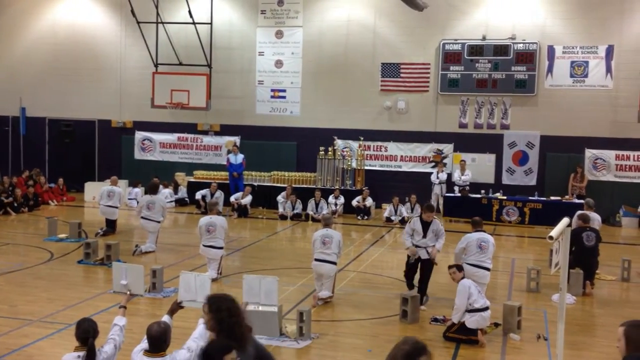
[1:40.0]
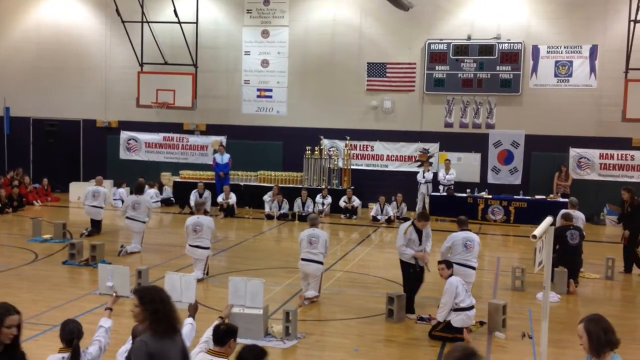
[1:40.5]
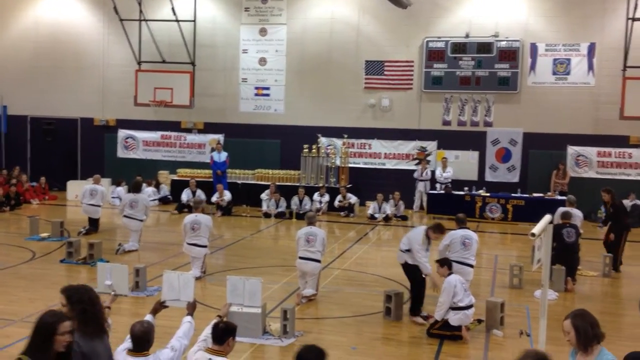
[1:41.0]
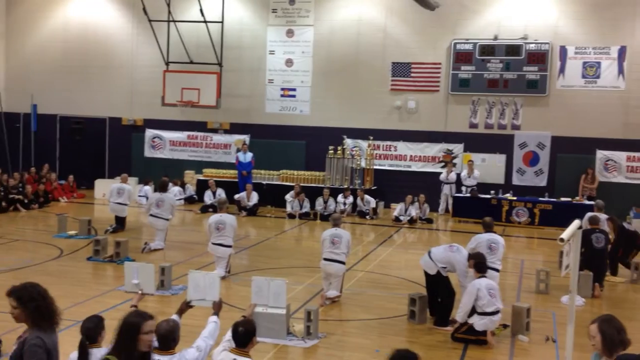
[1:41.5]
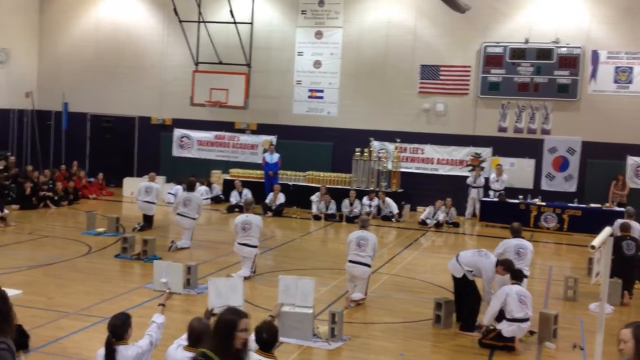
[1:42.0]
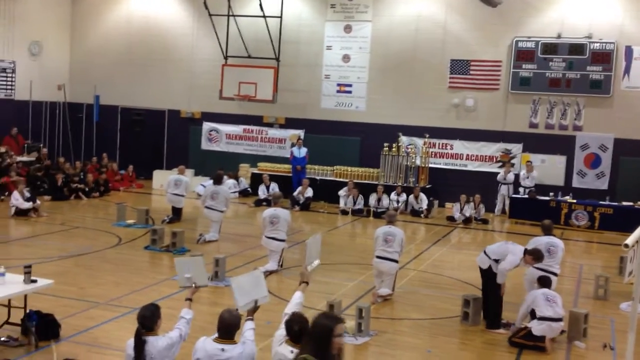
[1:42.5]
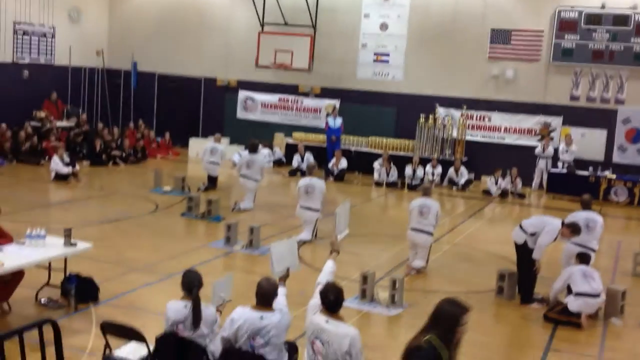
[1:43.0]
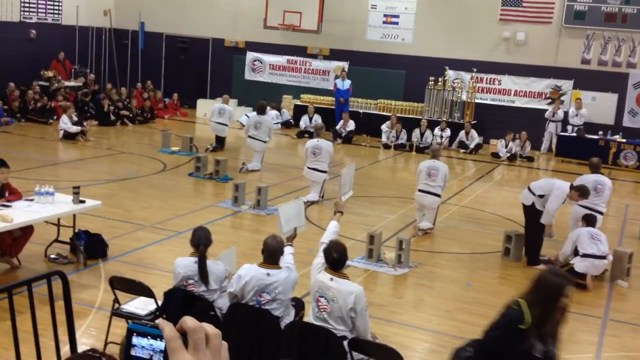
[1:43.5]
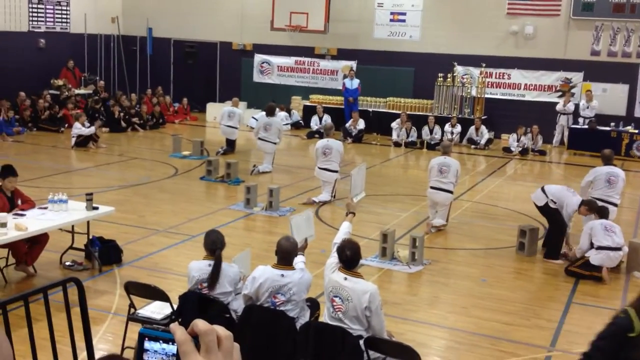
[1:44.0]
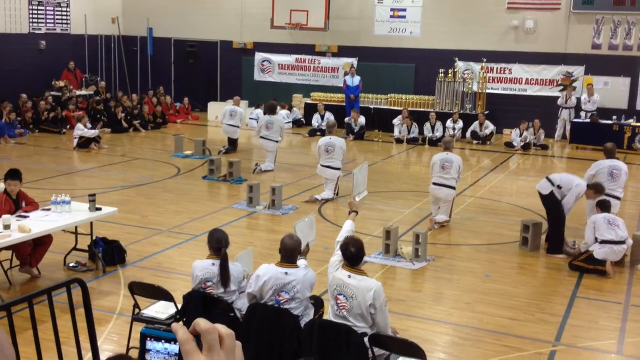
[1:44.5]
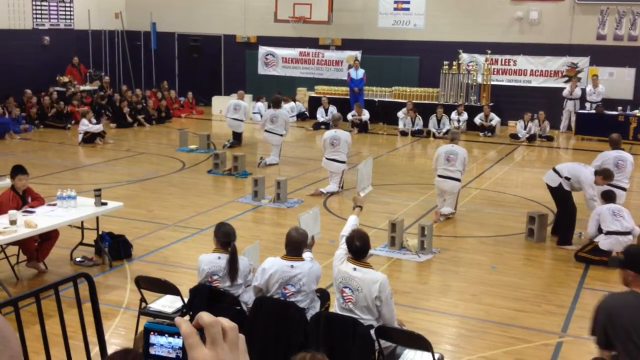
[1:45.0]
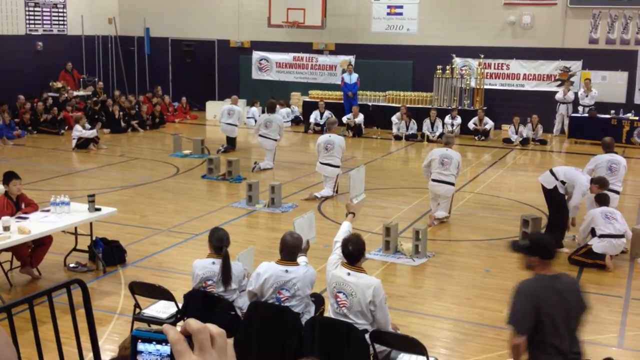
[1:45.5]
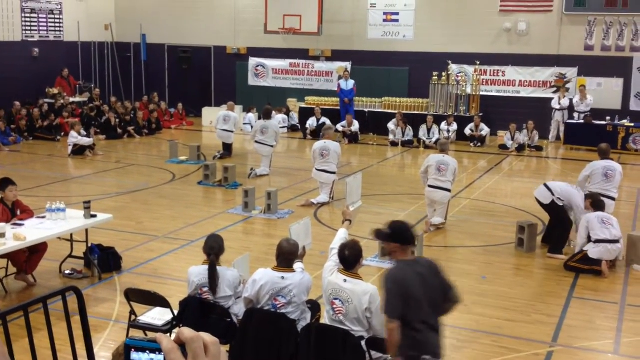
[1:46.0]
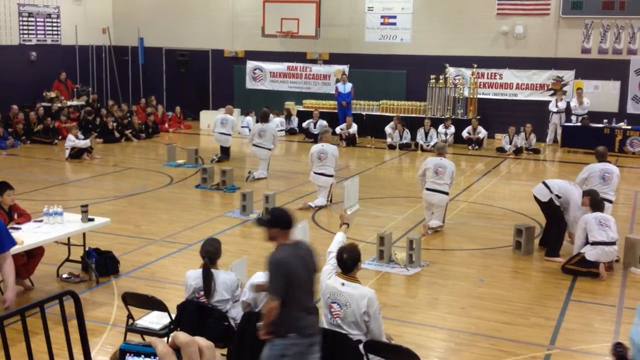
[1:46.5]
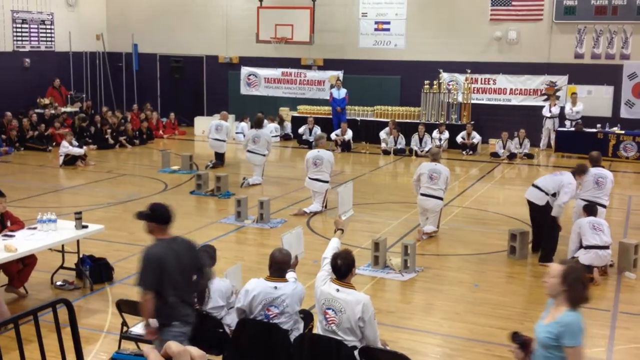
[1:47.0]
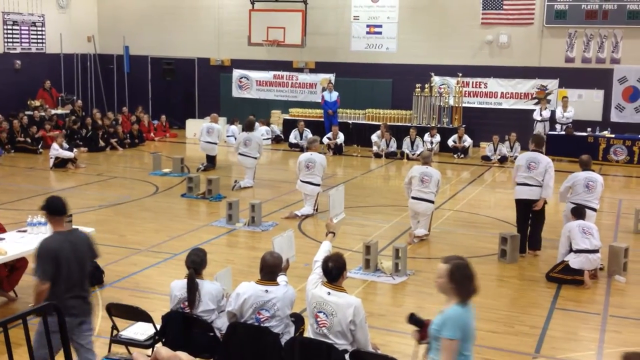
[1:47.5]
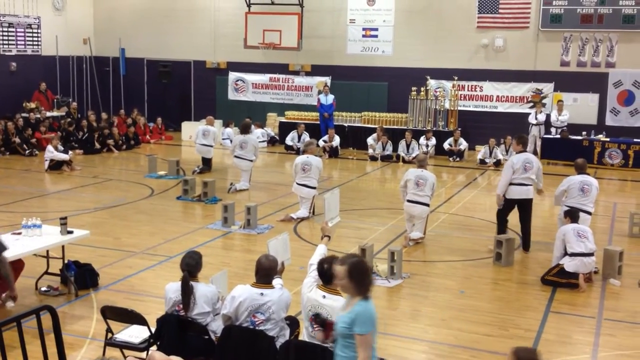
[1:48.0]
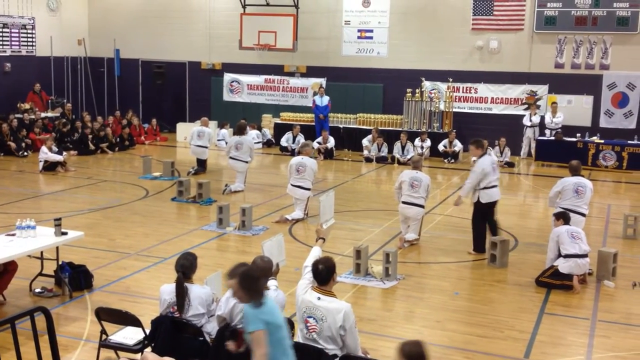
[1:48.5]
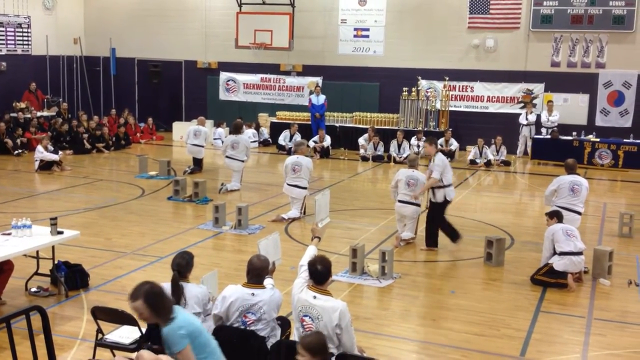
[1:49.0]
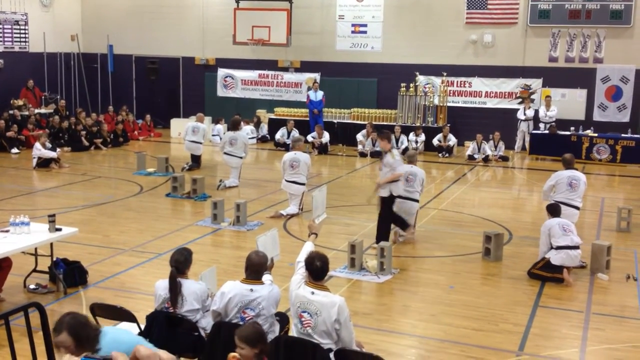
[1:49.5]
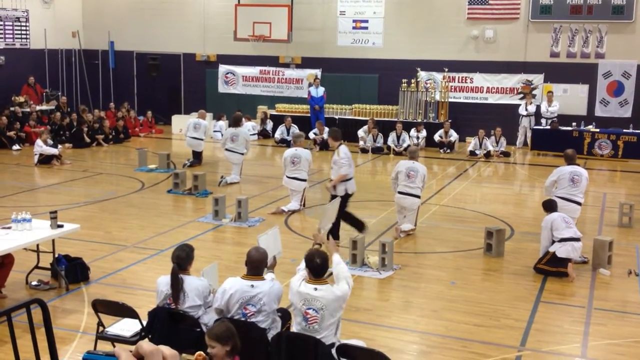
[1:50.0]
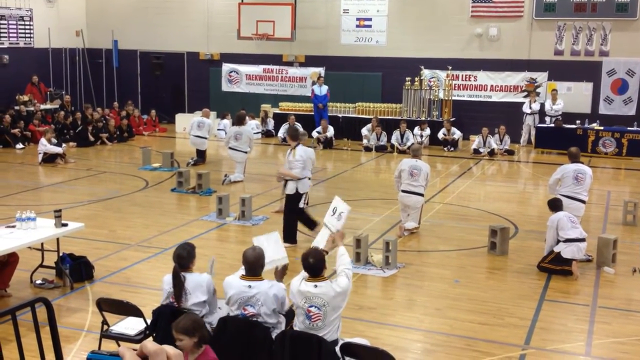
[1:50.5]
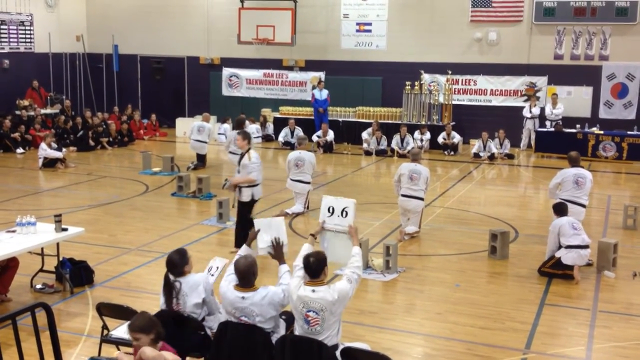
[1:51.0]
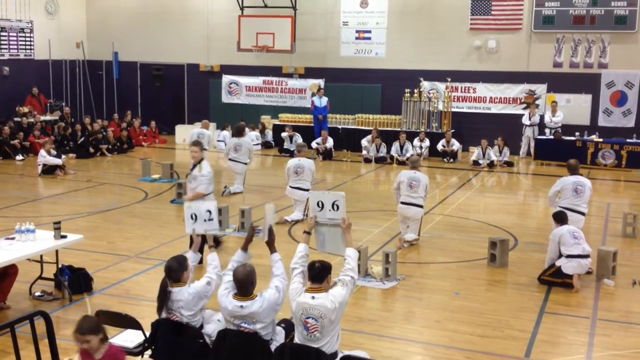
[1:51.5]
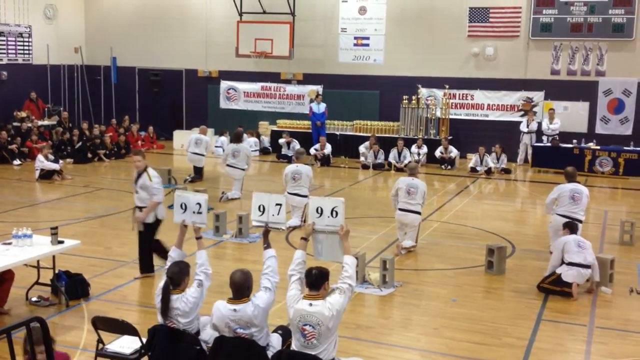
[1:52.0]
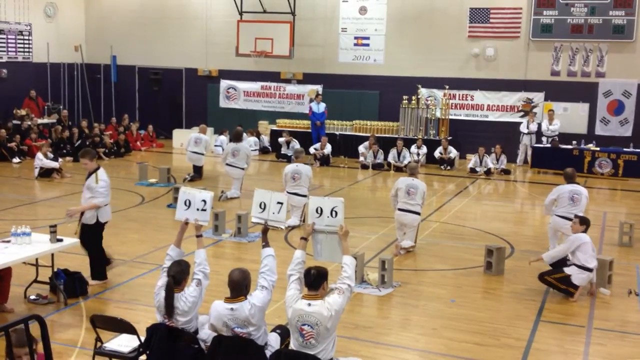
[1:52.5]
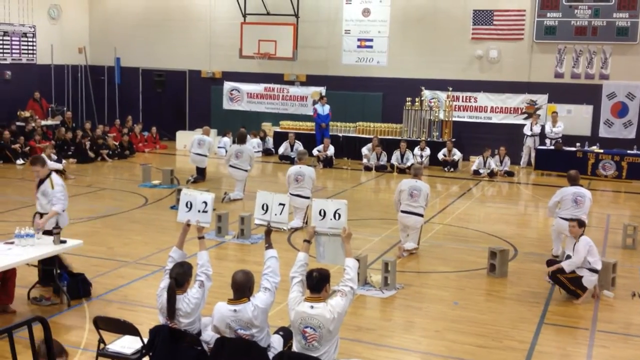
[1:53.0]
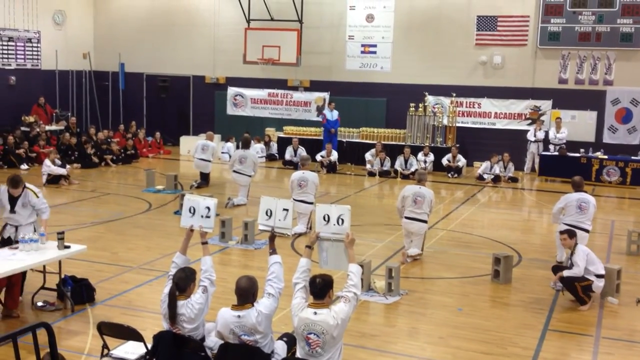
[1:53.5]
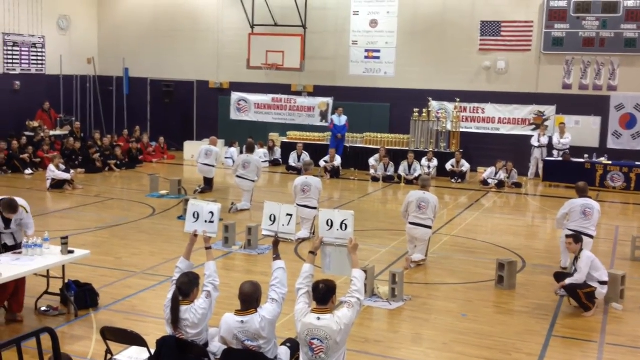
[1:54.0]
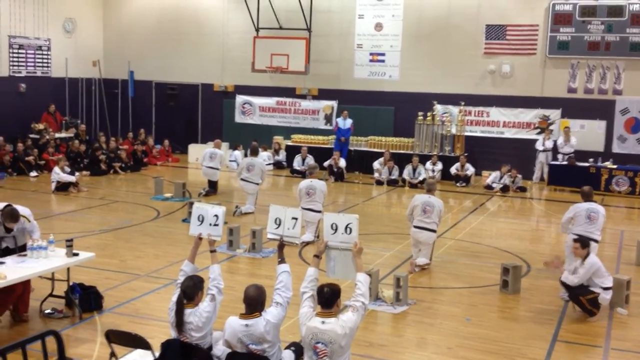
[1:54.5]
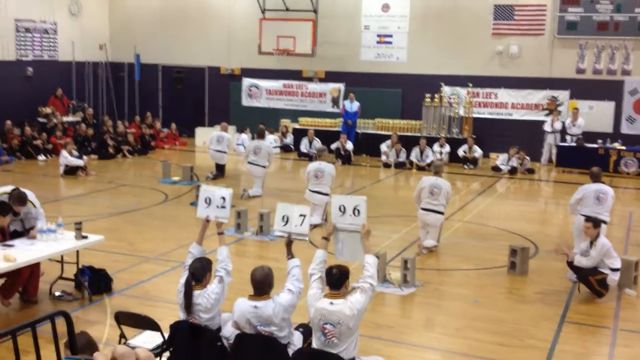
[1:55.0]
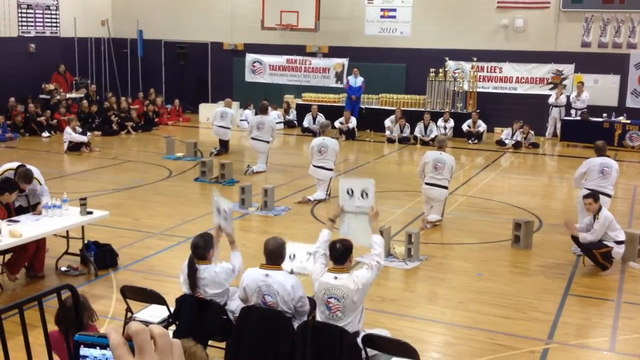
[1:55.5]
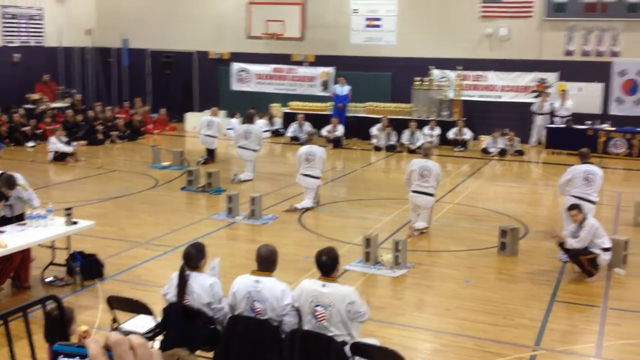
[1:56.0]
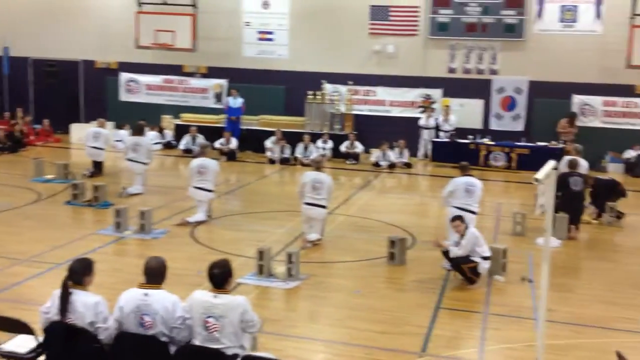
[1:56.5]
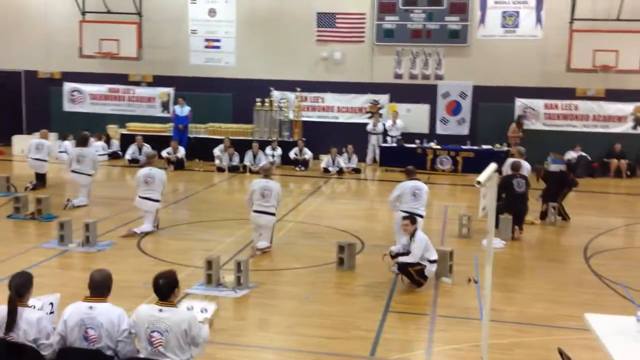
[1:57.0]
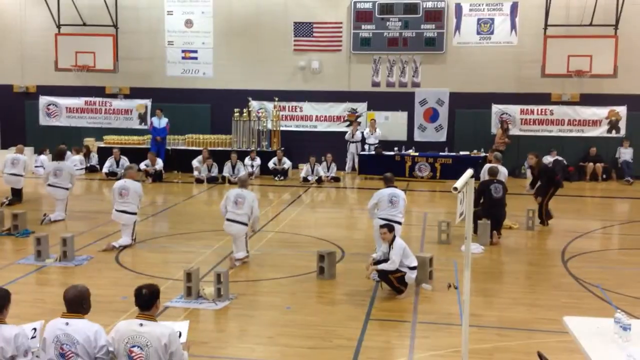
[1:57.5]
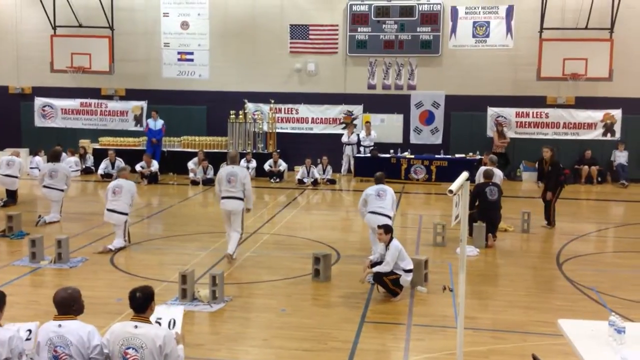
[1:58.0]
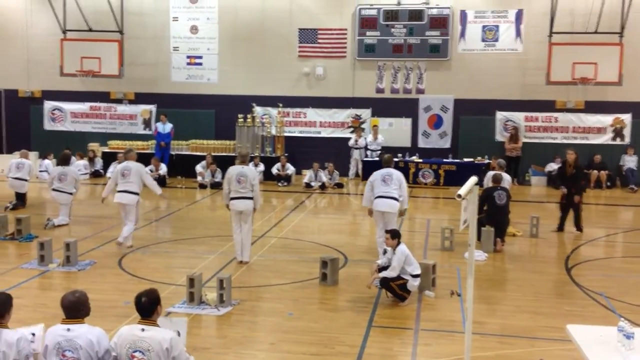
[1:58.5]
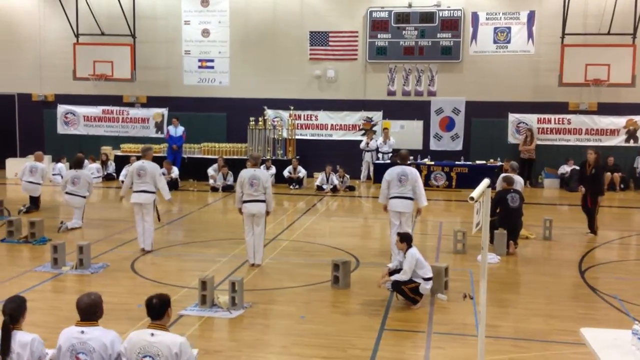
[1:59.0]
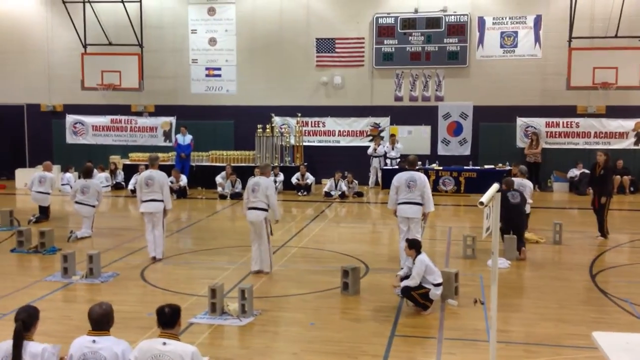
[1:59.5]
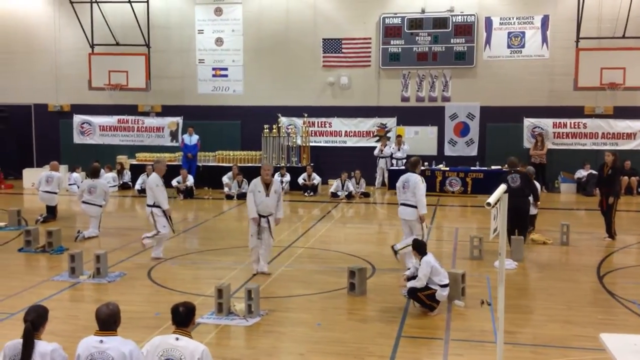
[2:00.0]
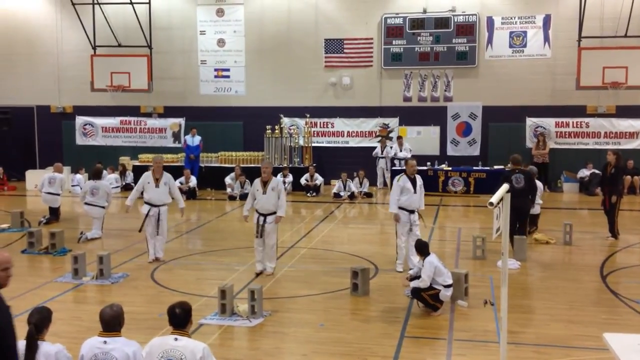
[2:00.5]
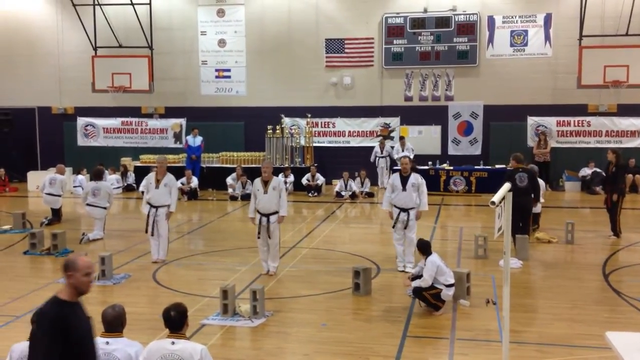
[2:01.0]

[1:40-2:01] The judges hold up their scores while the performers kneel, then turn the scores sideways to show the crowd sitting against the wall on the side. Someone walks around double-checking the bricks where the fire was. The judges show their scores to the back: 9.2, 9.7 and 9.6. People clap quietly as the scores are shown in each direction of the room, sitting and watching. Someone squats in the middle of the floor, watching. The competitors then stand up and turn around, probably to see their scores, and the video ends there.